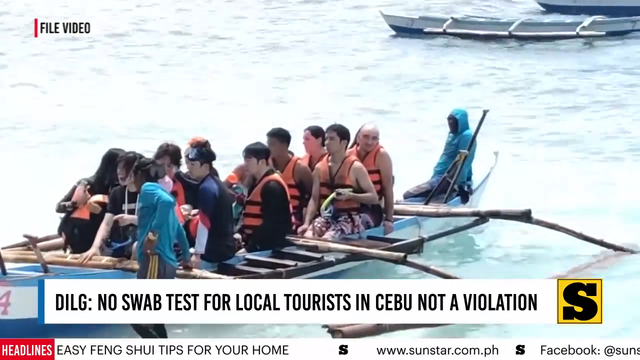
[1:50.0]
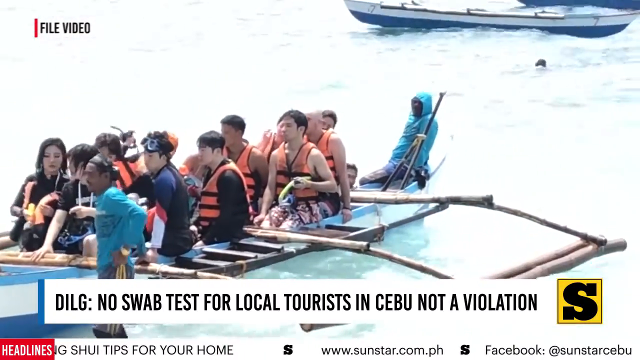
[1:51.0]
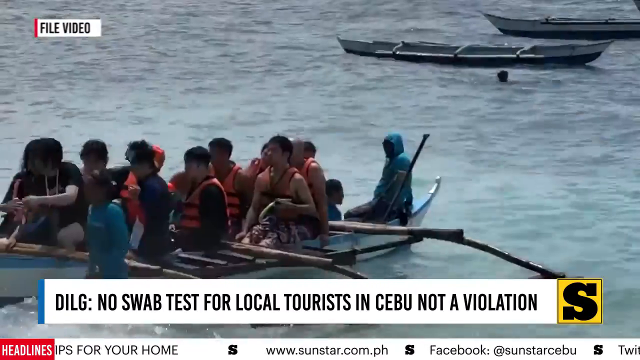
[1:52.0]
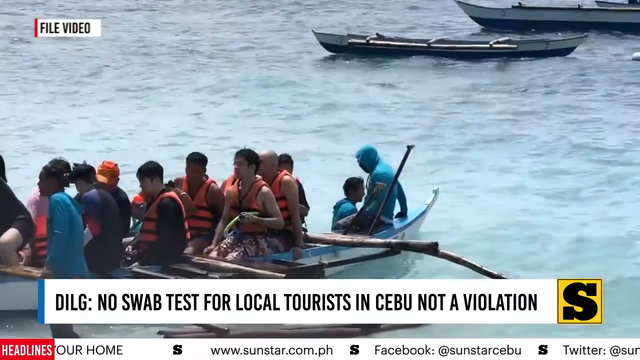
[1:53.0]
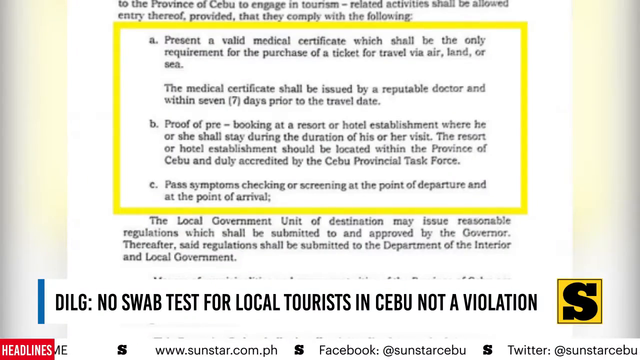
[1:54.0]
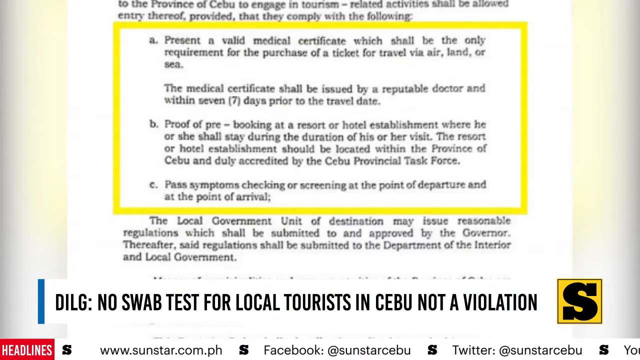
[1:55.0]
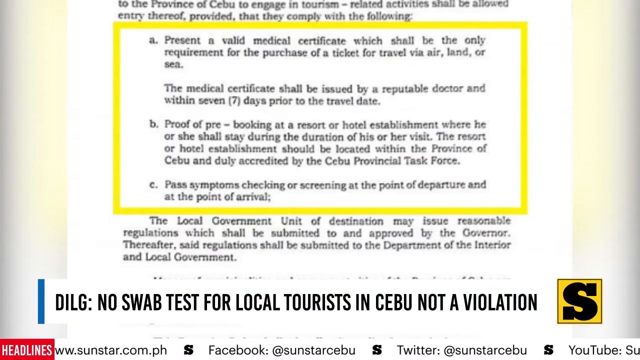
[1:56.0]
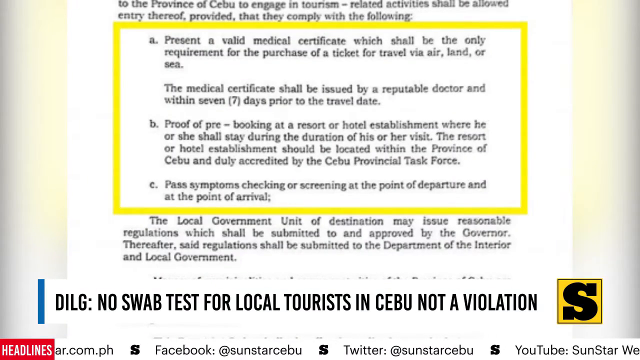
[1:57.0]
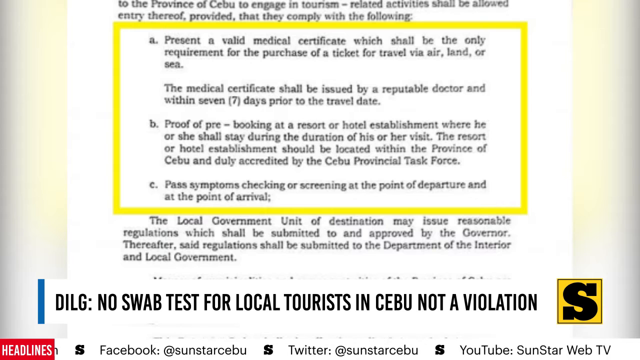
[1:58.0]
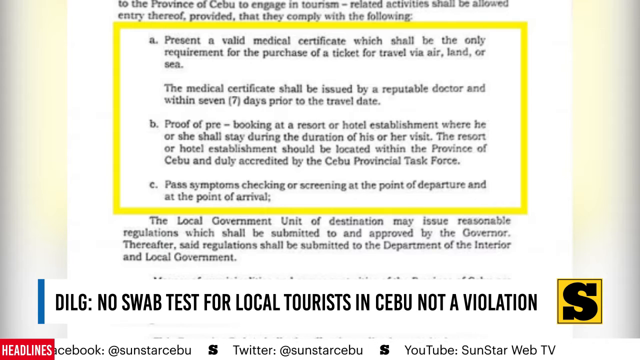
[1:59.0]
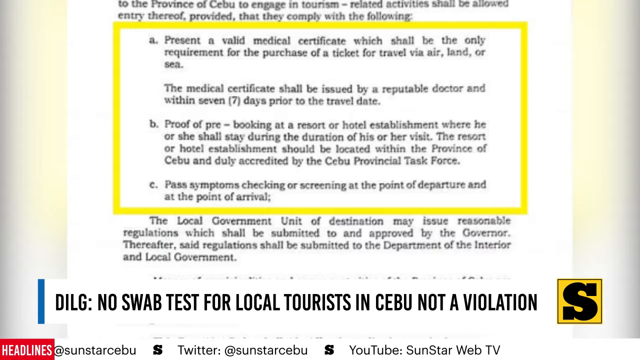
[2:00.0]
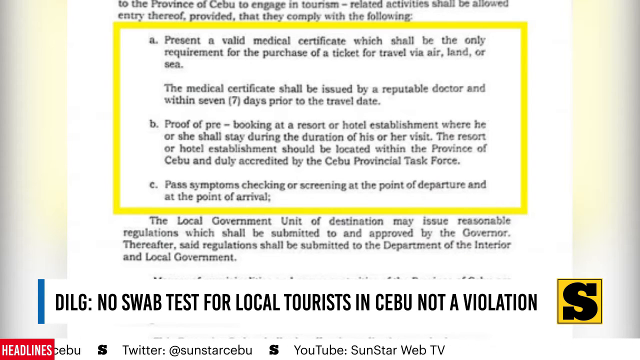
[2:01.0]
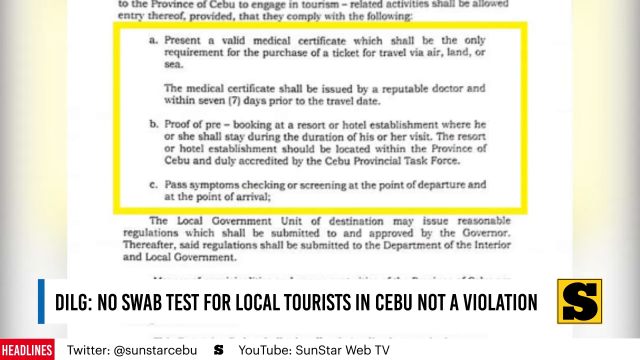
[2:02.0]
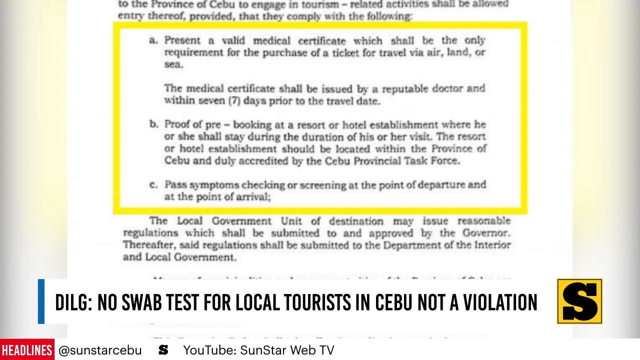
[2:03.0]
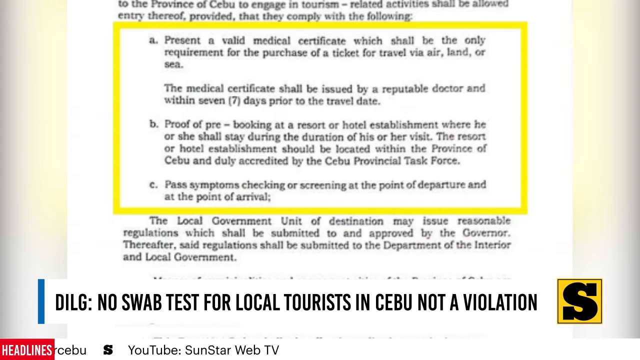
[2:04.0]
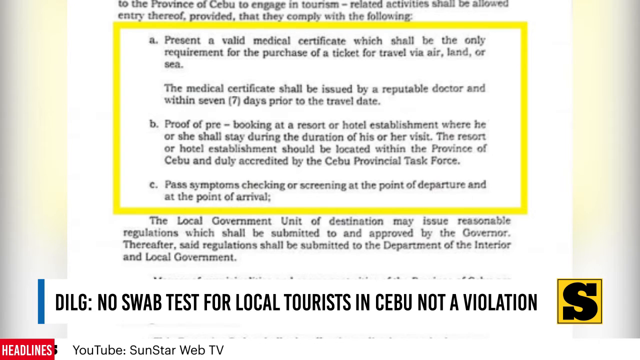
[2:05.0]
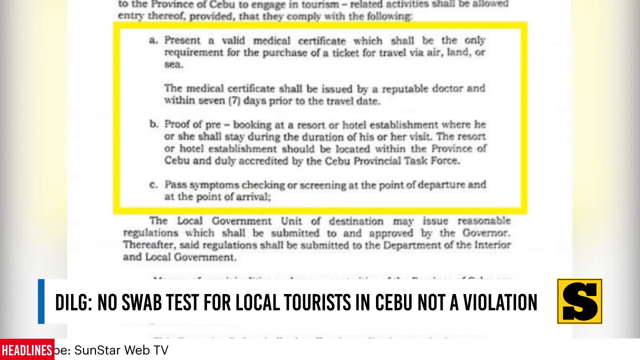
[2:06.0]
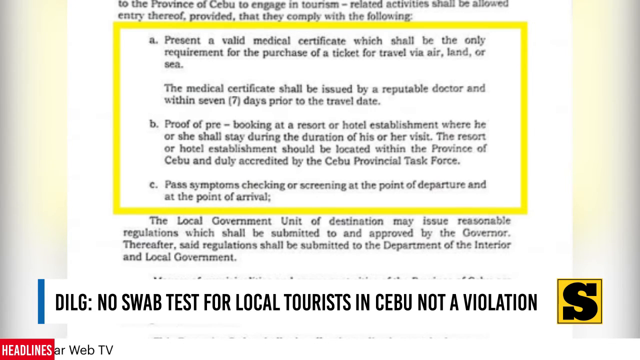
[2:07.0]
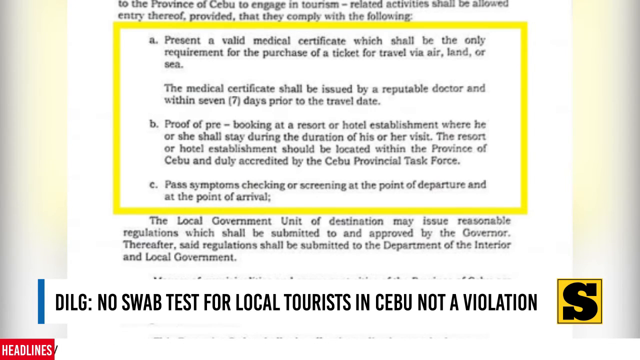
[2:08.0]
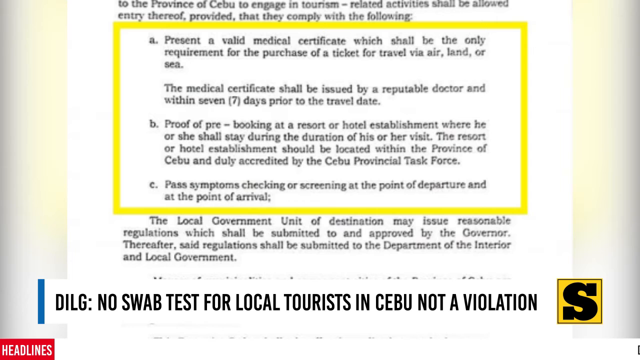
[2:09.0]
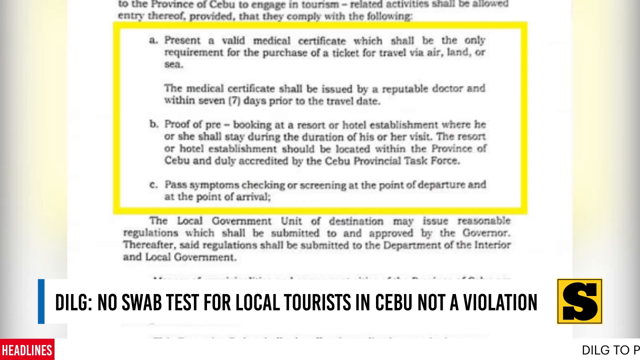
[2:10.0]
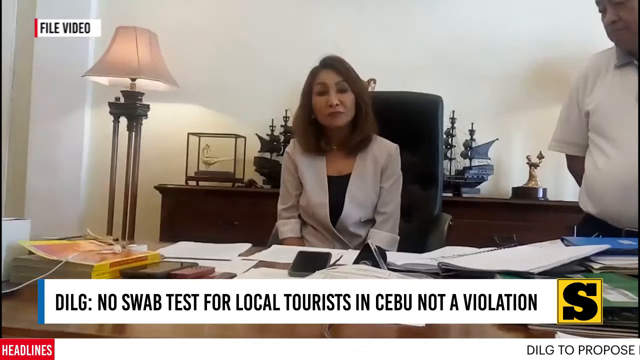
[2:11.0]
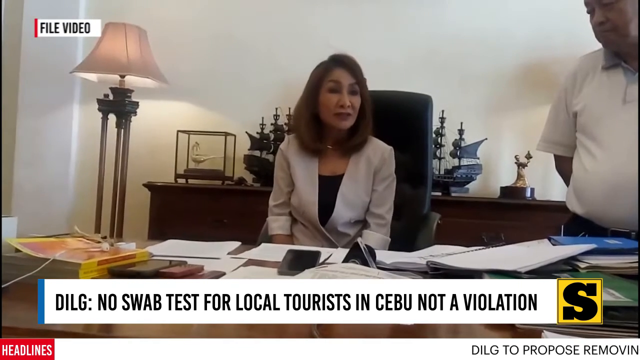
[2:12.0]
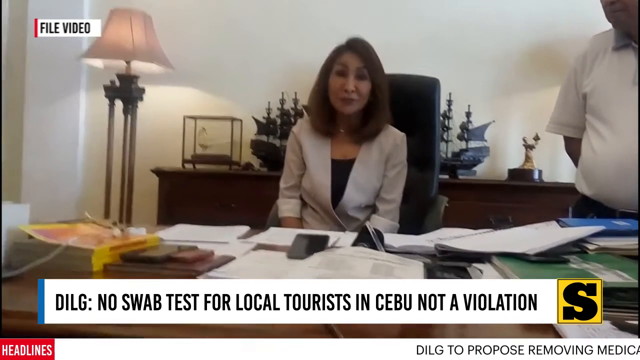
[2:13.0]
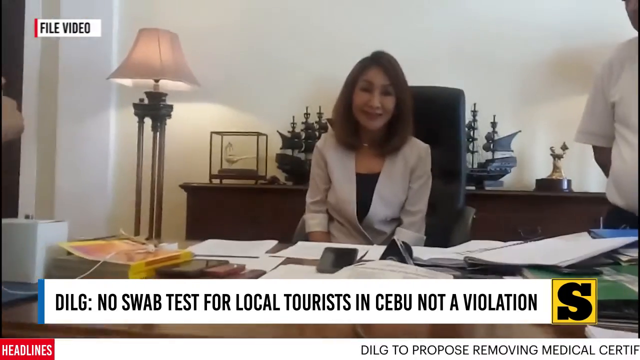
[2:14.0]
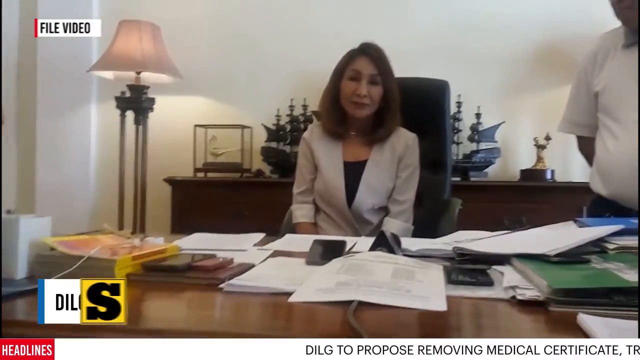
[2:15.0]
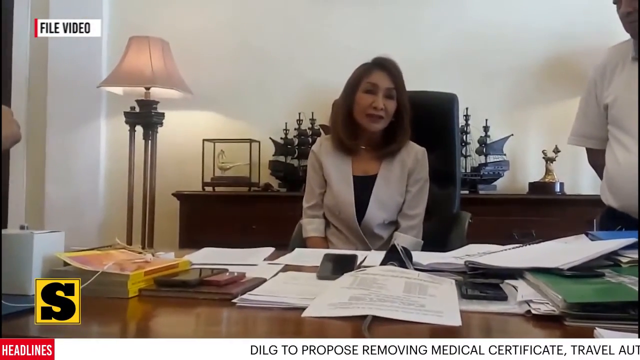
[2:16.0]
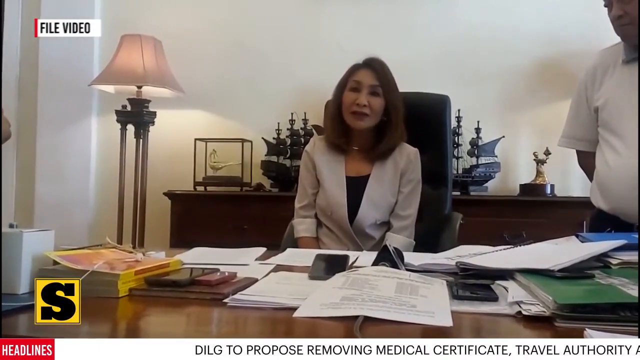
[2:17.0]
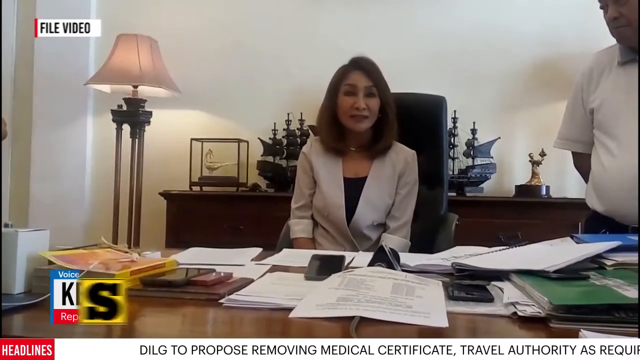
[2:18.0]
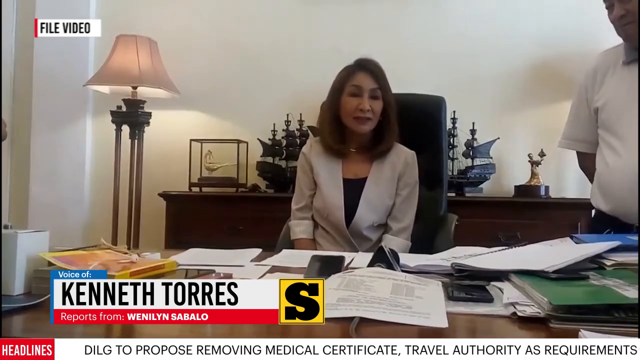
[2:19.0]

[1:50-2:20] The view pans to a printed document on a piece of paper with three sections, A, B and C, highlighted in a yellow box. Section A reads "present a valid medical certificate which shall be the only requirement for the purchase of a ticket for travel via air, land, and sea. The medical certificate shall be issued by a reputable doctor and within seven days prior to the travel date." Section B reads "proof of pre-booking at a resort or hotel establishment where he or she shall stay during the duration of his or her visit. The resort or hotel establishment should be located within the province of Cebu and duly accredited by the Cebu Provincial Task Force." Section C concerns symptoms checking or screening at the point of departure and at the point of arrival. The rest of the document is not boxed in or highlighted.